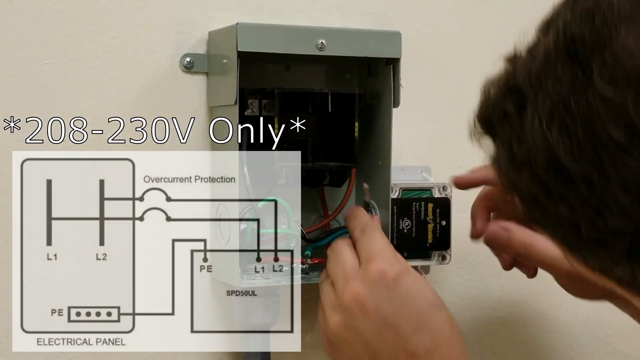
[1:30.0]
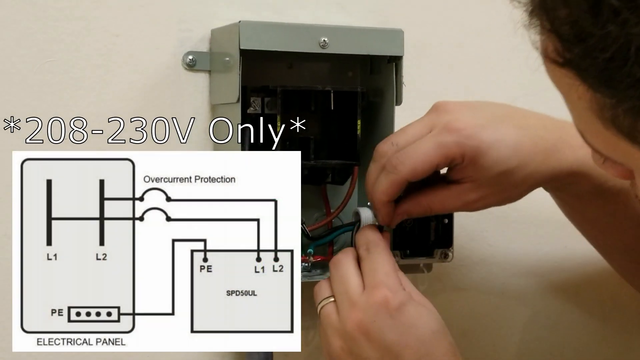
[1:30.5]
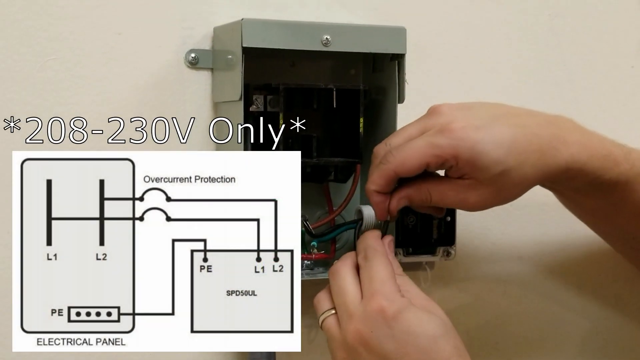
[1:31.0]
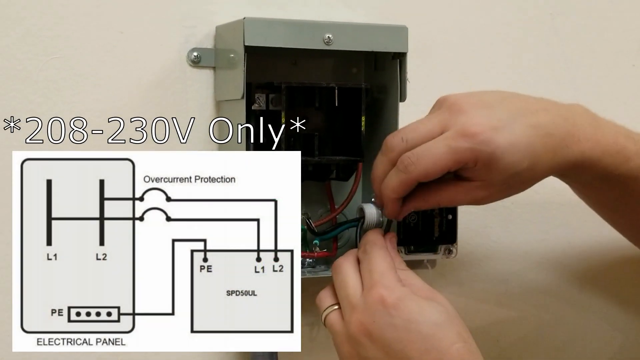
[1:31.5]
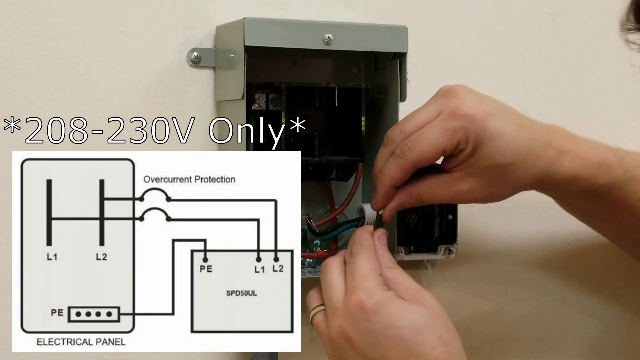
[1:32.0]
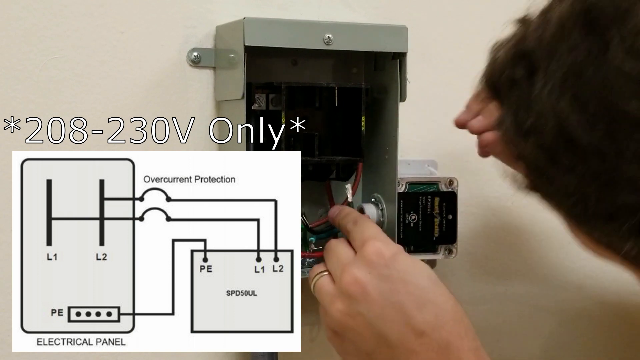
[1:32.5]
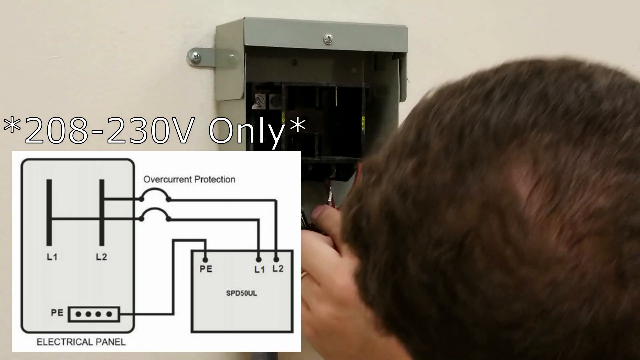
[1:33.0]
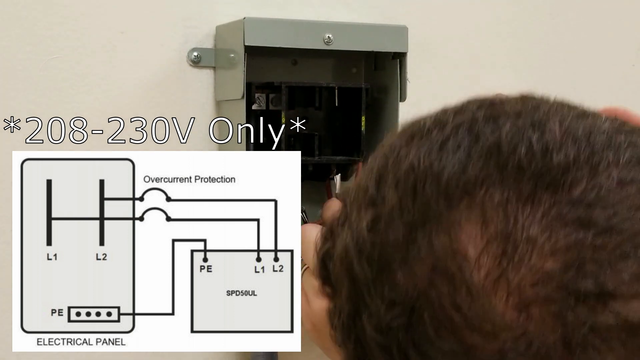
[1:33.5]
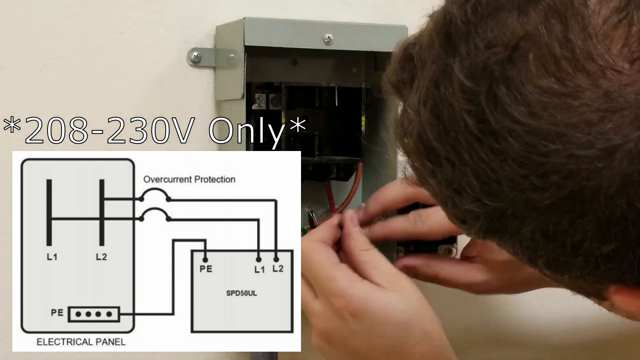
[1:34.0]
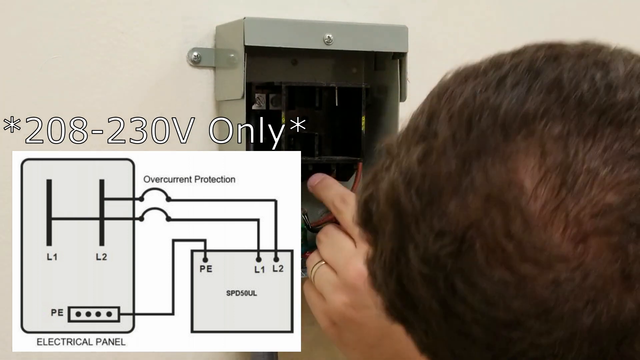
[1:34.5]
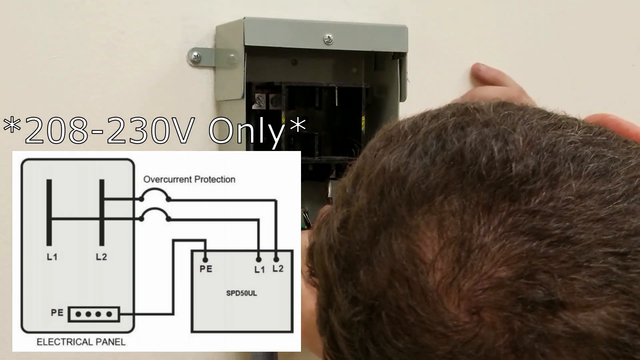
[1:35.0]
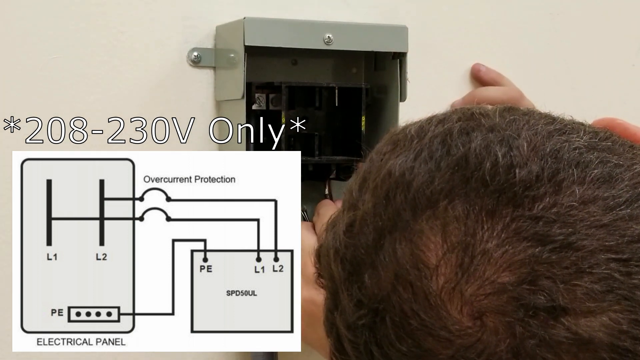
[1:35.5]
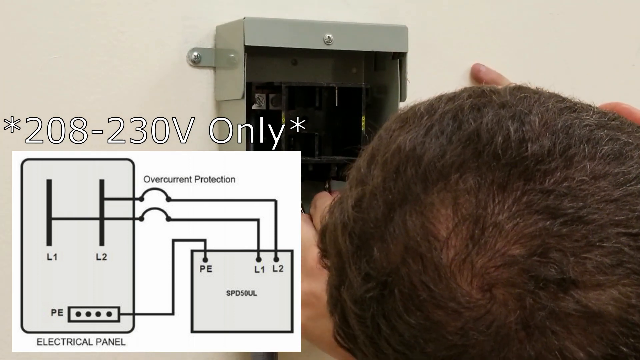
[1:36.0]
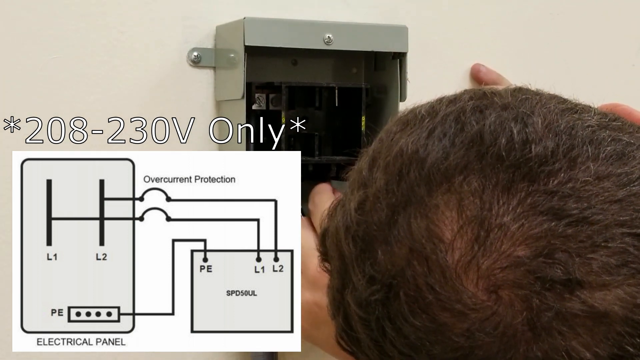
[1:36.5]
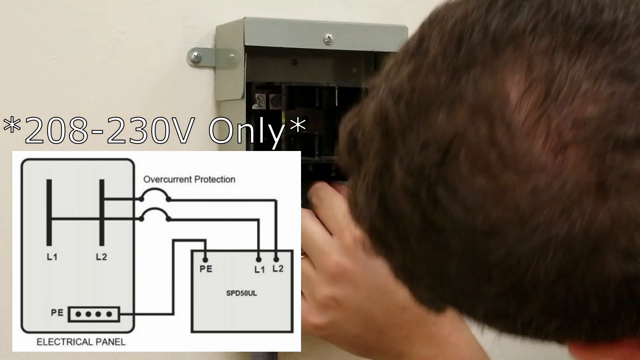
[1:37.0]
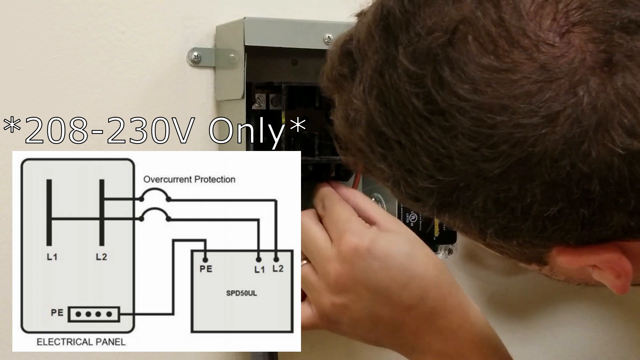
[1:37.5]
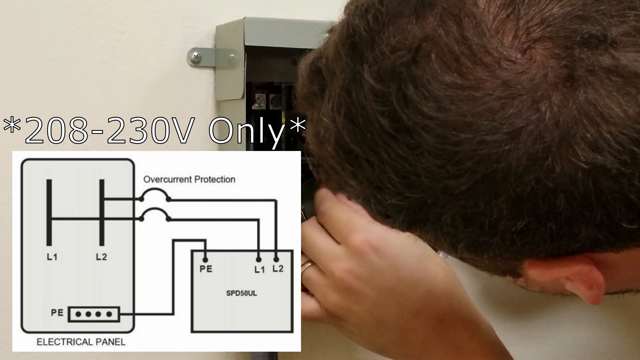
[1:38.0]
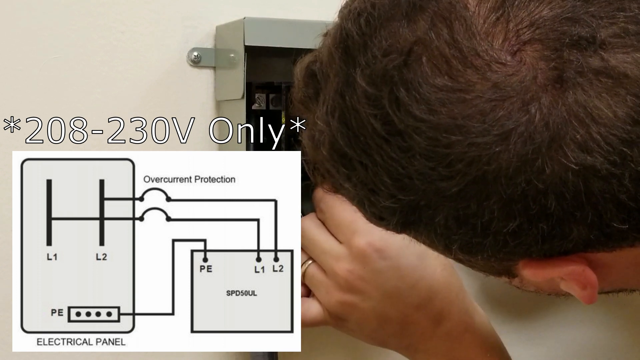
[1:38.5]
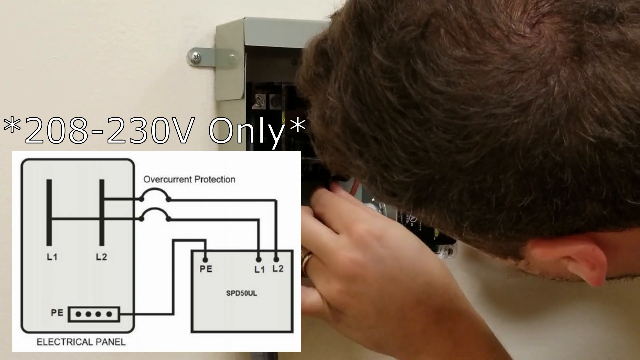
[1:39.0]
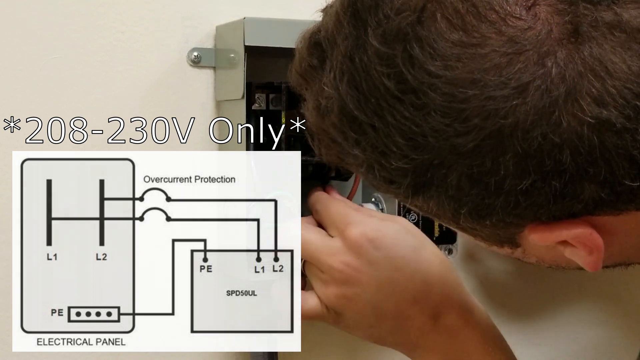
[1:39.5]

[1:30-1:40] The diagram shows where the wires connect into the L1 and L2 ports, aligned with those in the surge protector, and a PE wire meant to connect to the PE of the electrical panel. Overcurrent protection seems to be indicated for the L1 and L2 wires. While the diagram is shown, he straightens the silver frayed strands of one of the black wires, then looks inside the panel to connect it to the black box underneath, wiggling it in to maintain a connection and checking inside.